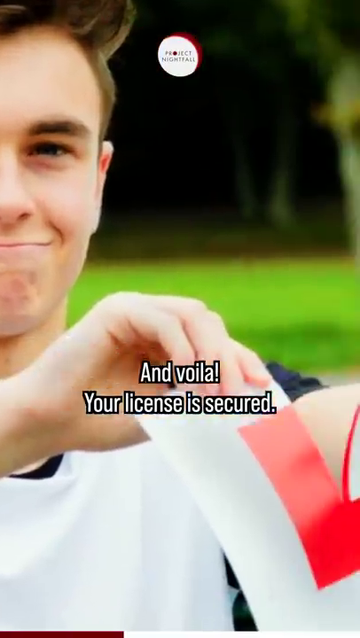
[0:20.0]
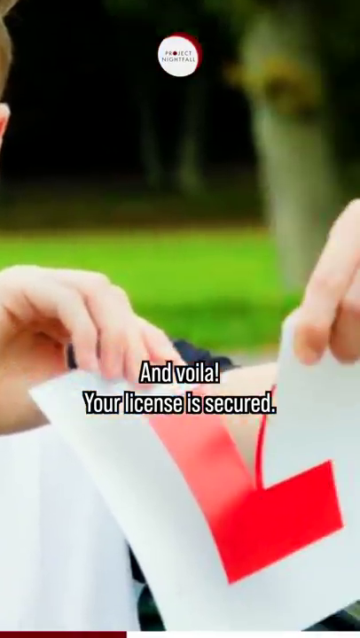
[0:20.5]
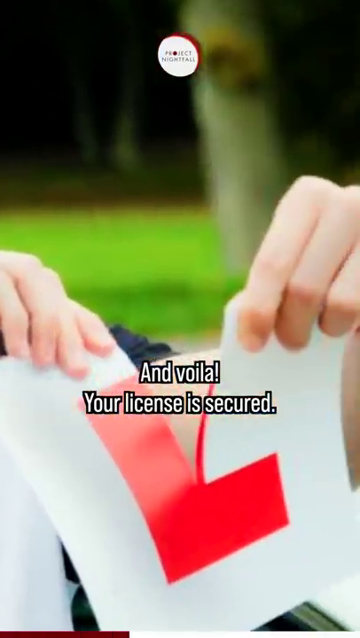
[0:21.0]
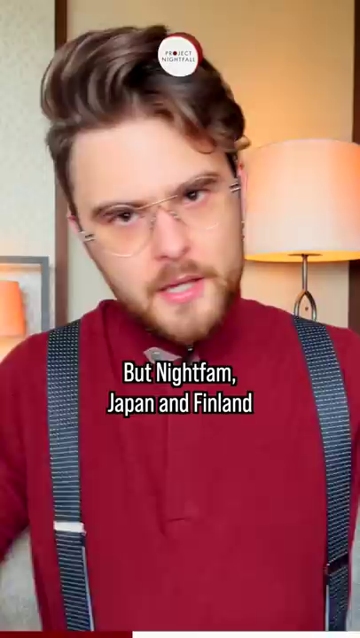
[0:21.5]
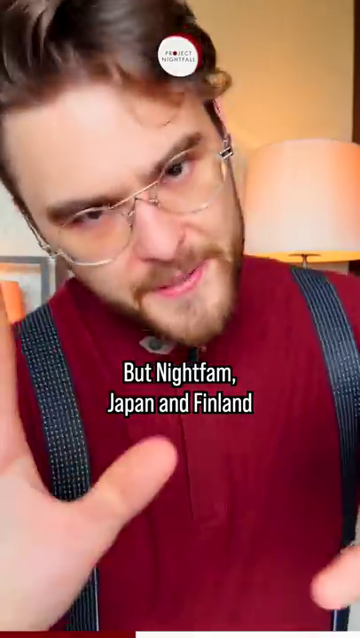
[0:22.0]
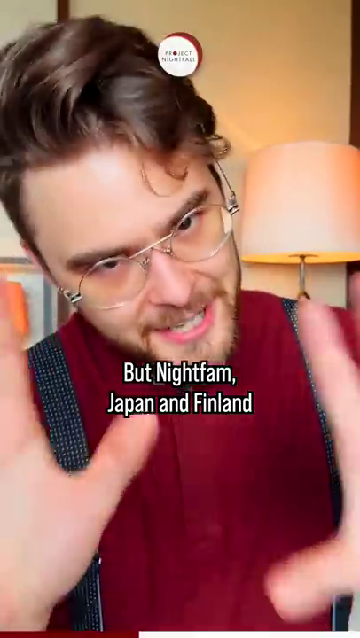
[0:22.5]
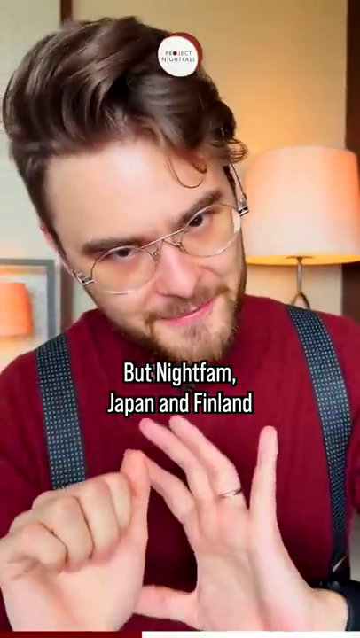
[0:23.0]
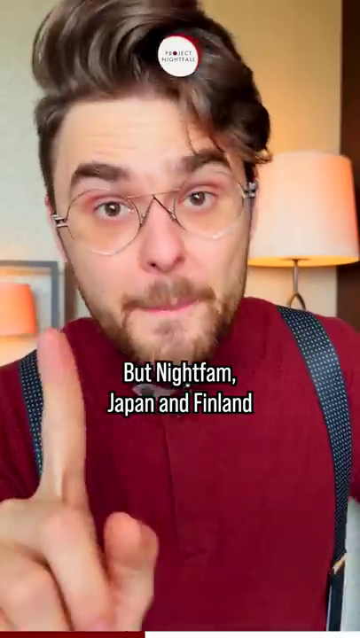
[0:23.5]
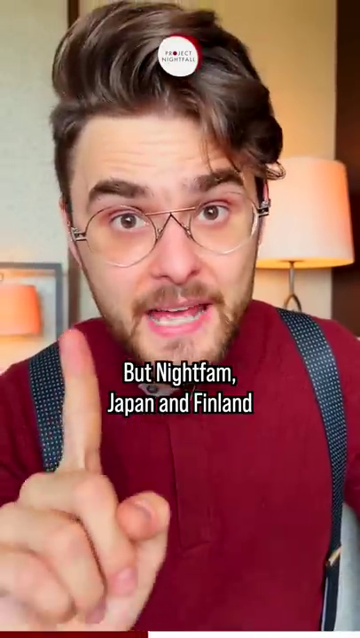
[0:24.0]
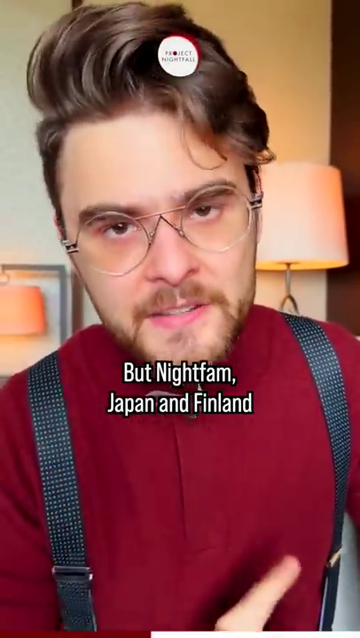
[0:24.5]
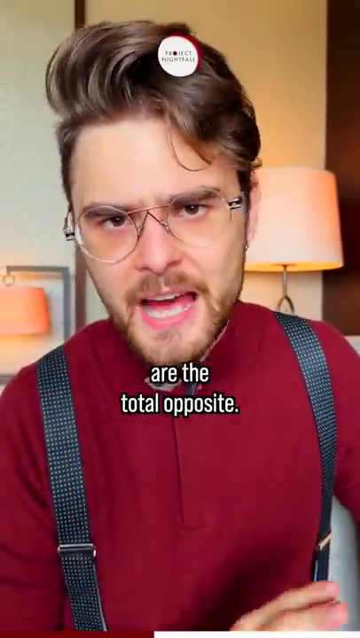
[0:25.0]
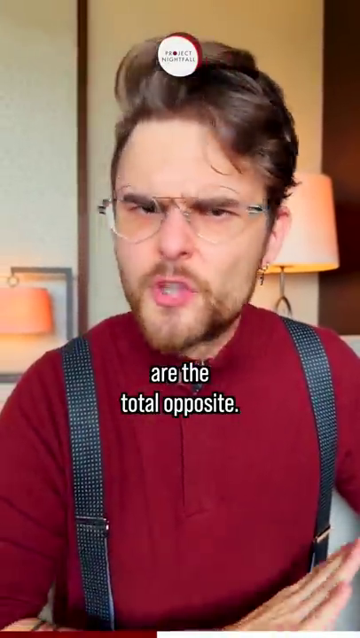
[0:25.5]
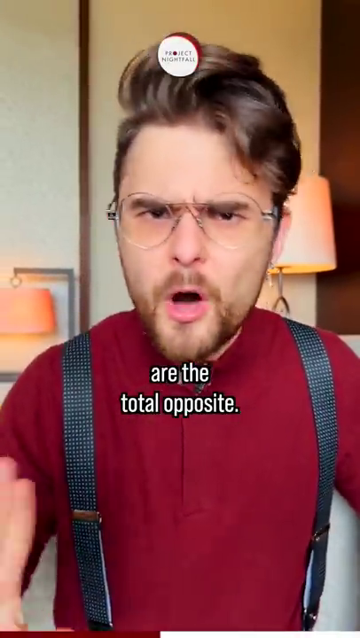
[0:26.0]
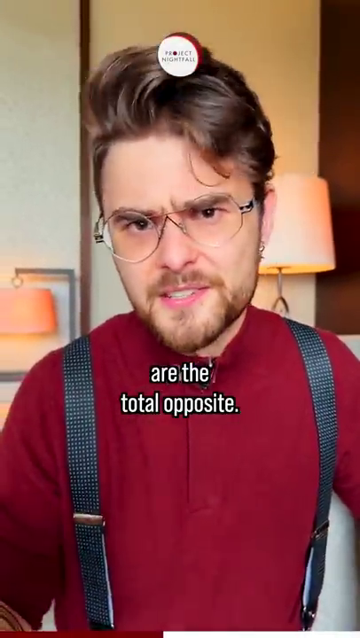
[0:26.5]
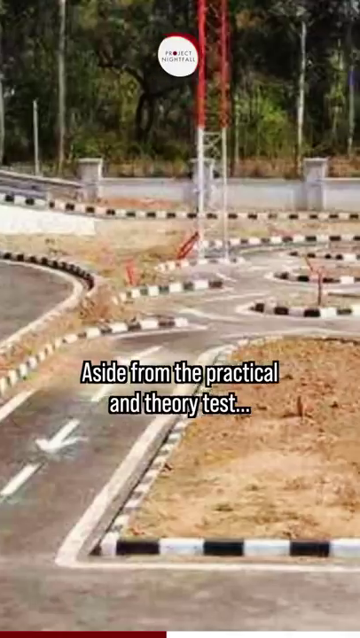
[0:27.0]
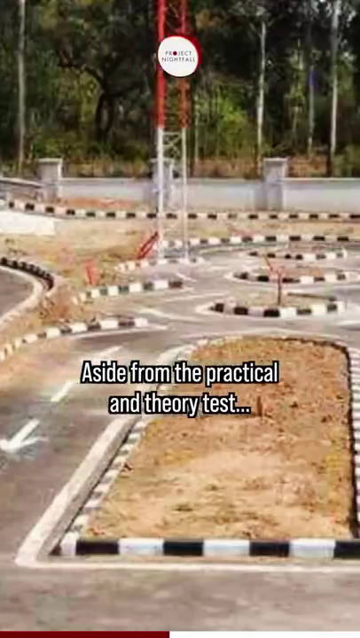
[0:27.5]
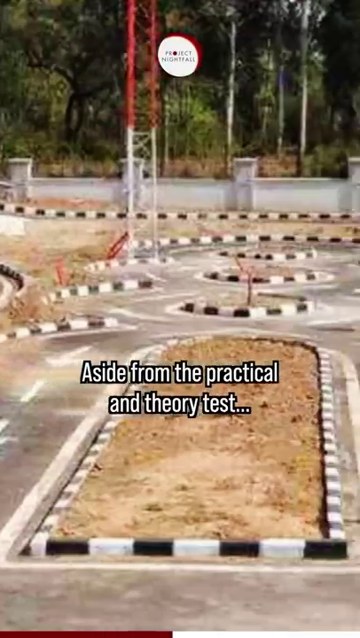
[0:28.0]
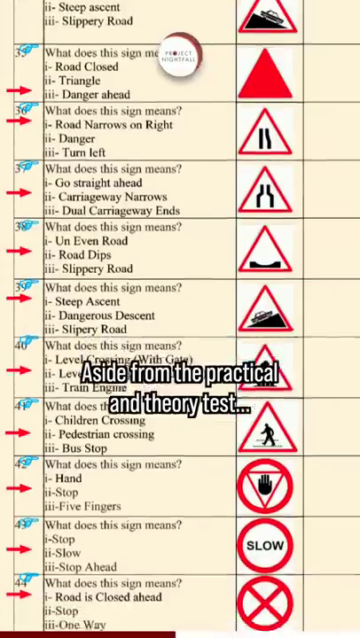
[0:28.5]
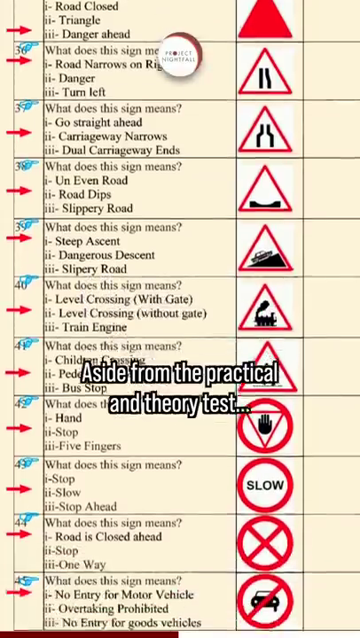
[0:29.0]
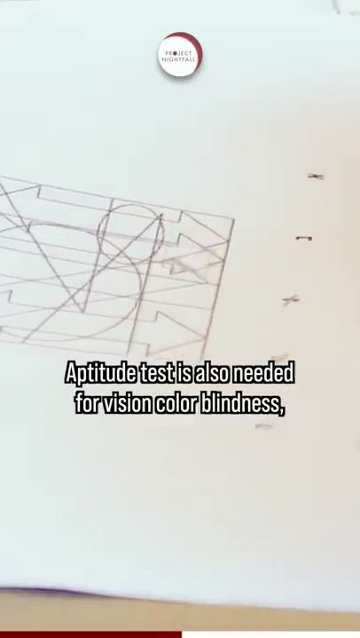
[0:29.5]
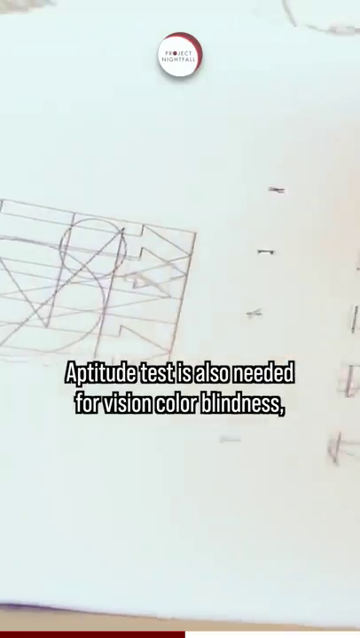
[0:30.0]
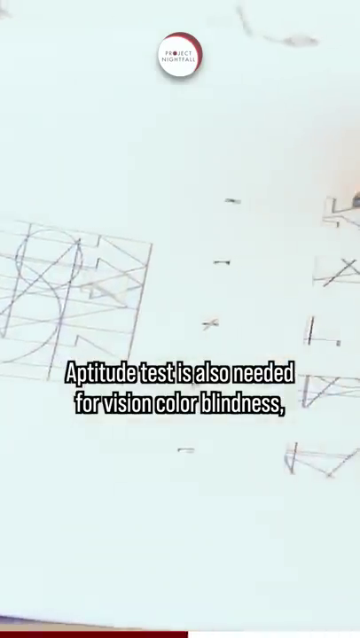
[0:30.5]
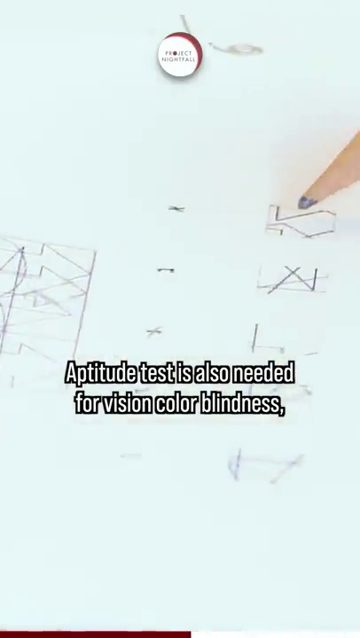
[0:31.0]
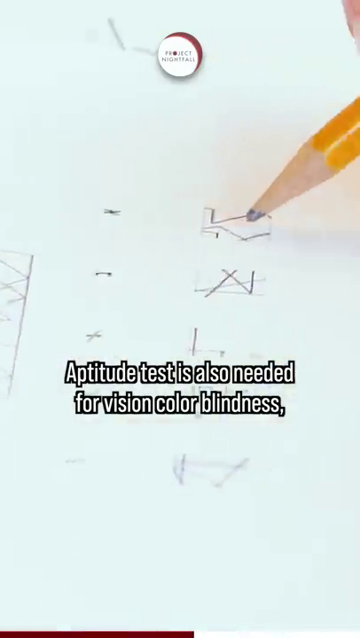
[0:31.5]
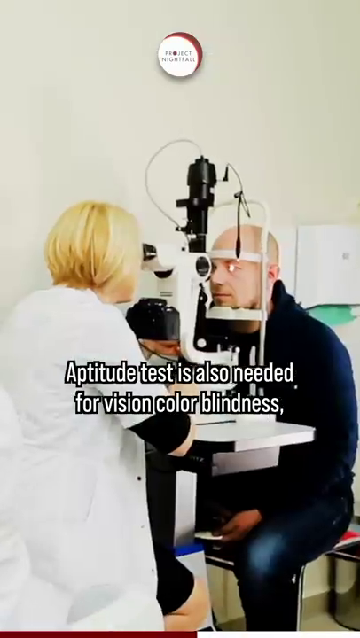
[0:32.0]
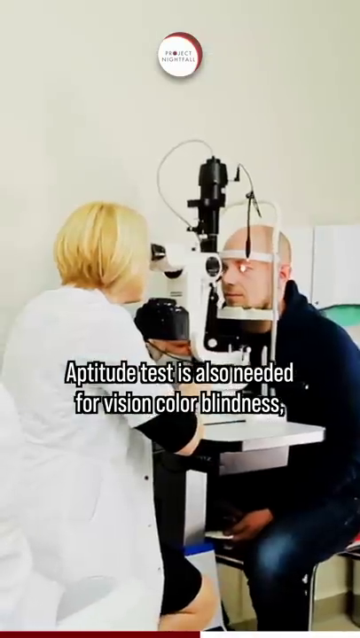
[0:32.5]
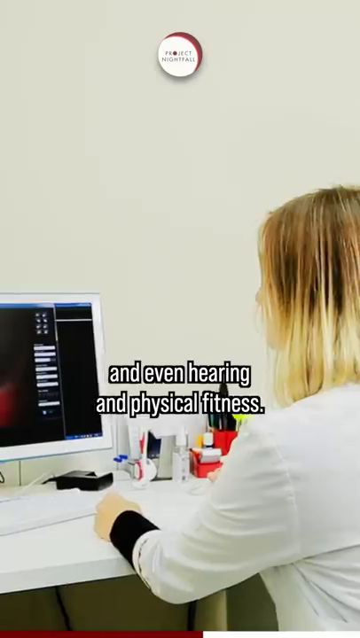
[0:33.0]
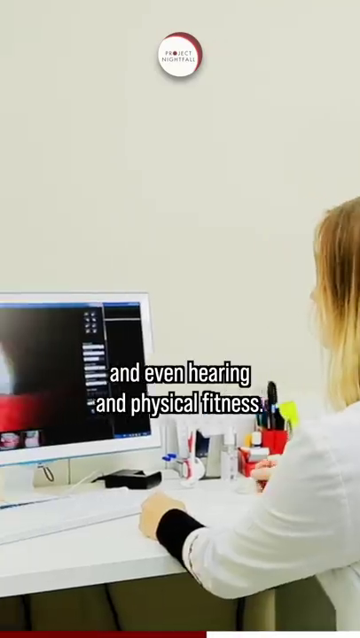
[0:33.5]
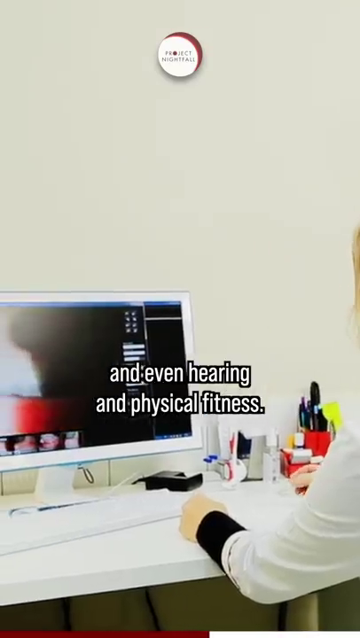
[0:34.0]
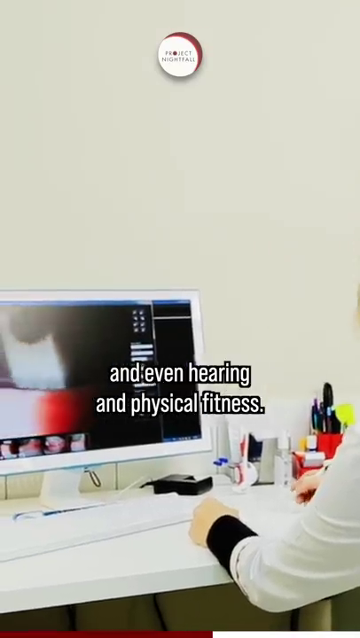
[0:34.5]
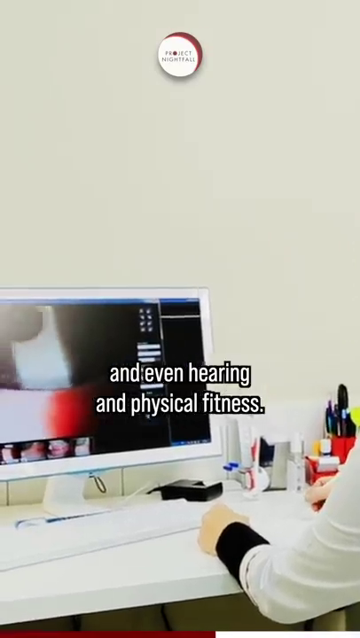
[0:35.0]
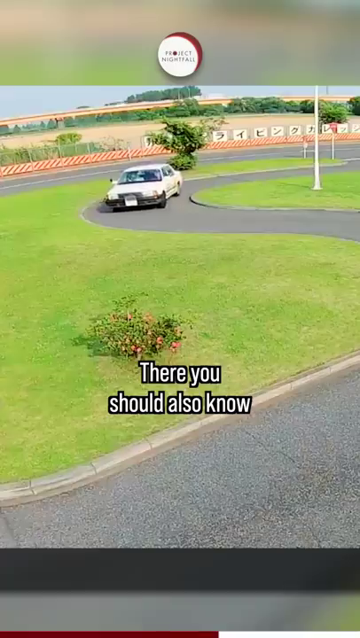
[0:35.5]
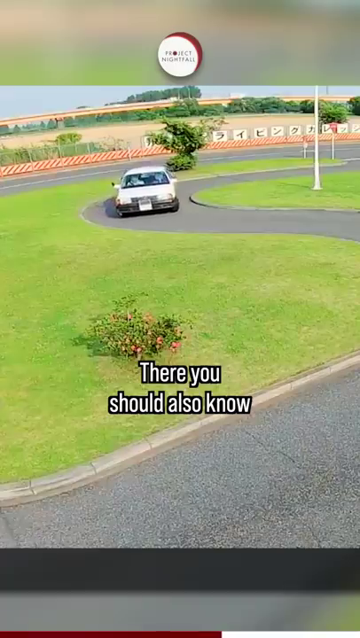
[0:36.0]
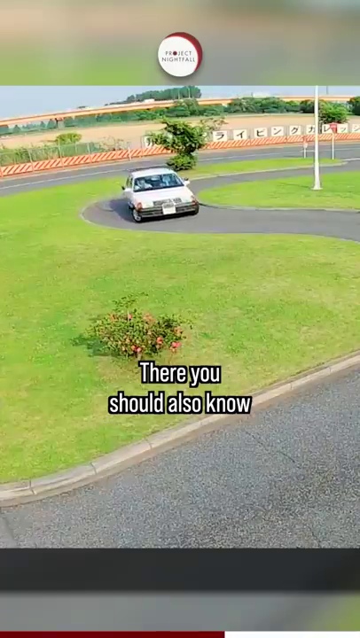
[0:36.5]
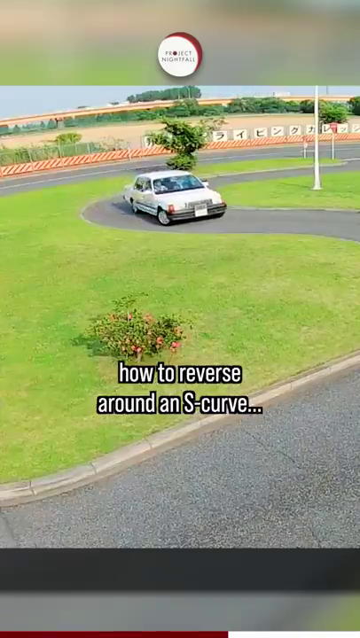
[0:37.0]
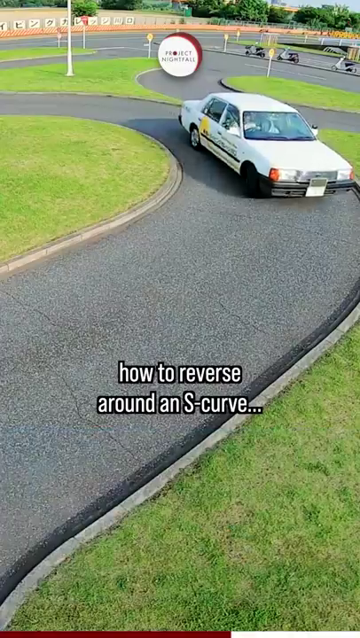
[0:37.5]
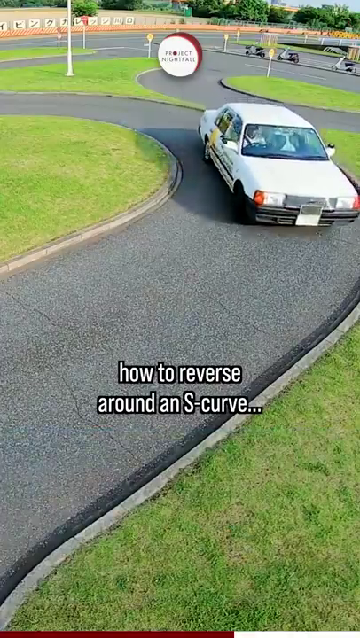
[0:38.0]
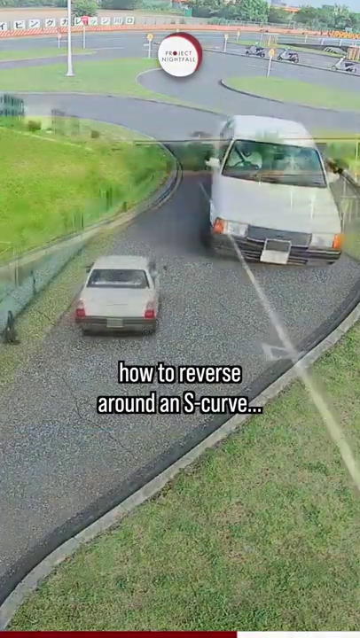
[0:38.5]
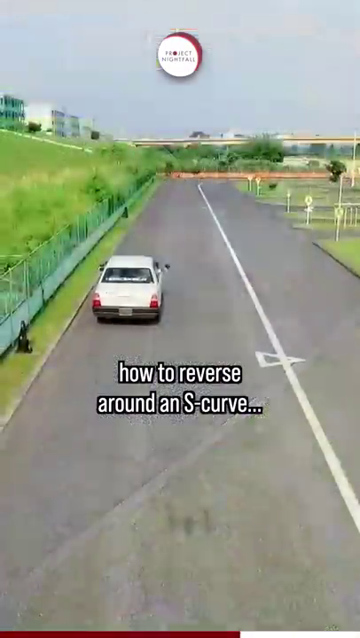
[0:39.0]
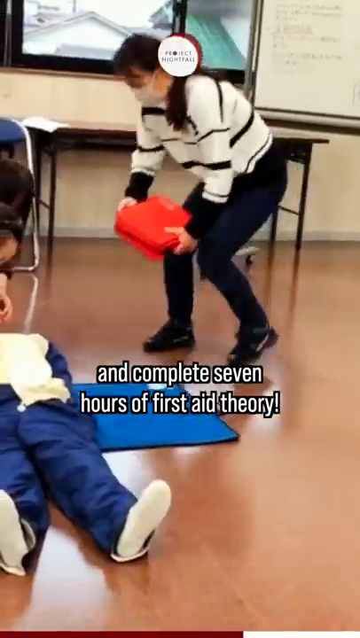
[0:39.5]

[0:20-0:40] The host appears back on screen and says "but," bringing in additional countries, Japan and Finland, as the total opposite. The scenes show an aptitude test, multiple street signs, and a man taking an eye exam.